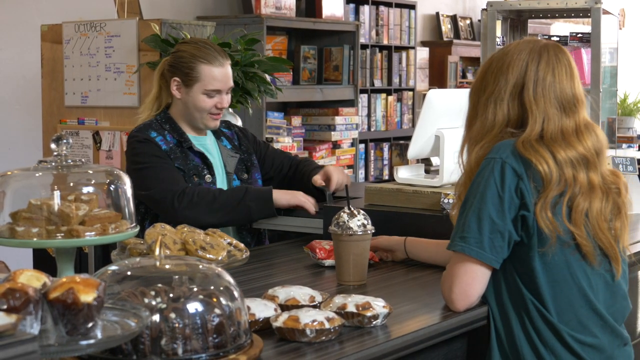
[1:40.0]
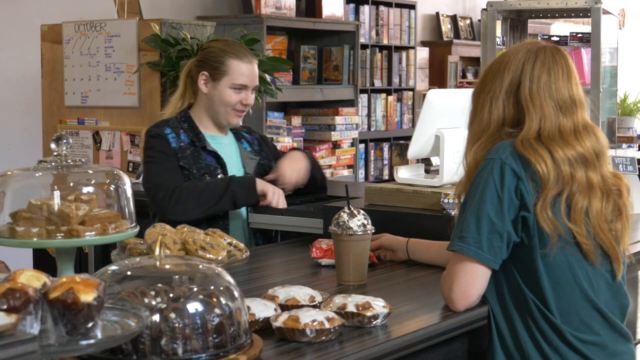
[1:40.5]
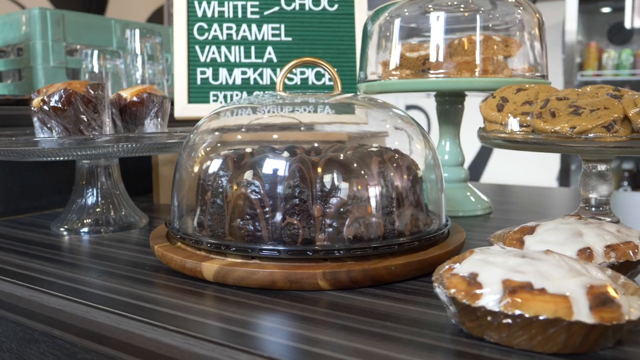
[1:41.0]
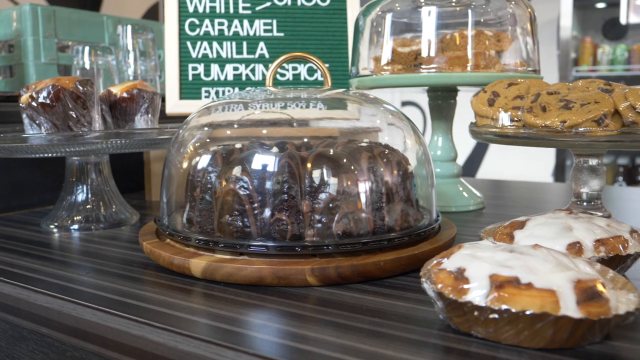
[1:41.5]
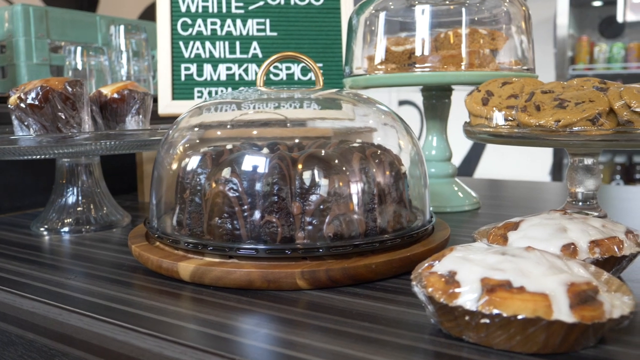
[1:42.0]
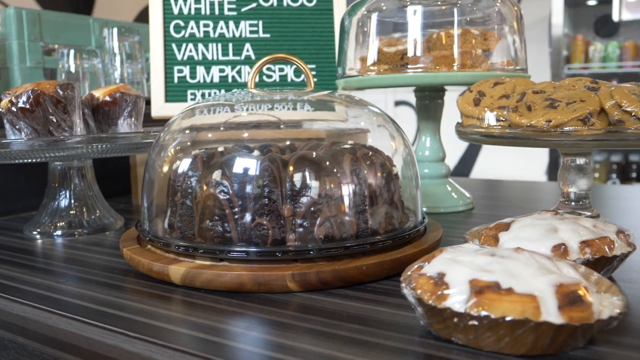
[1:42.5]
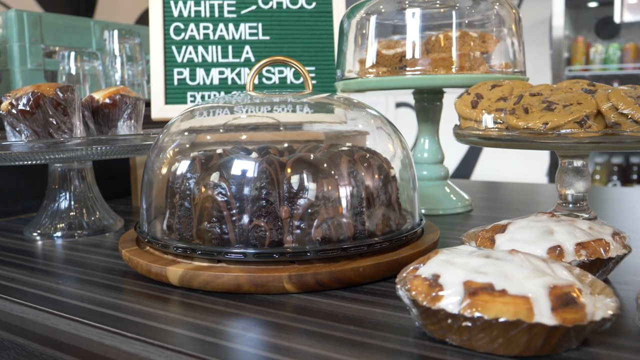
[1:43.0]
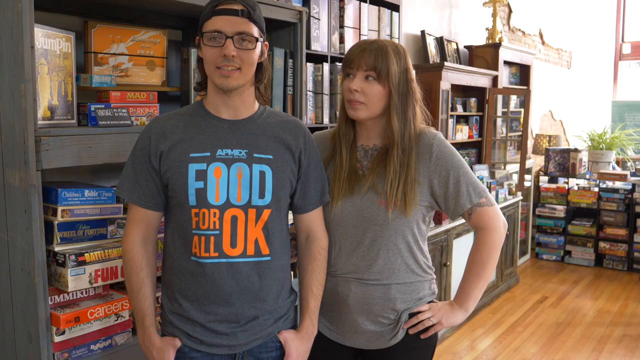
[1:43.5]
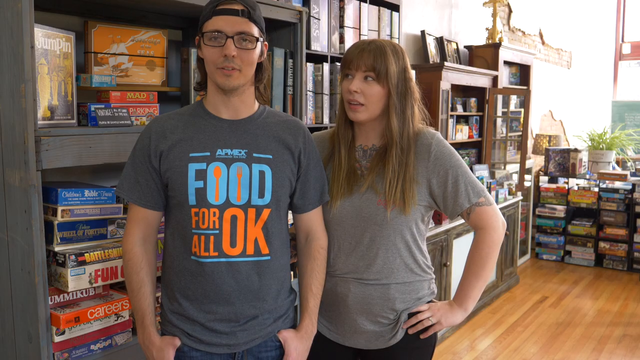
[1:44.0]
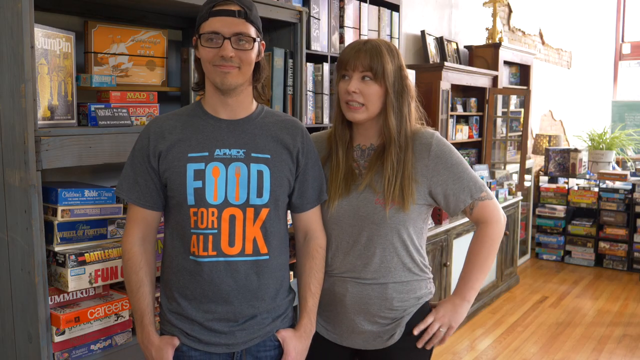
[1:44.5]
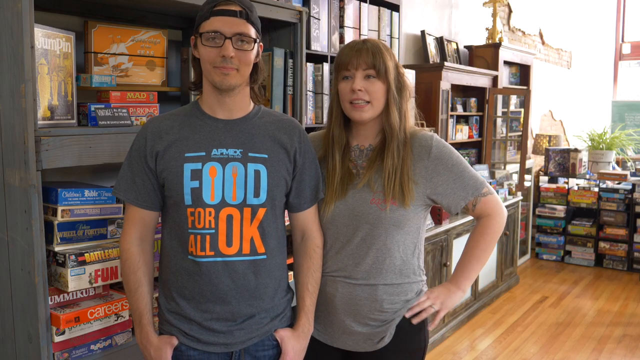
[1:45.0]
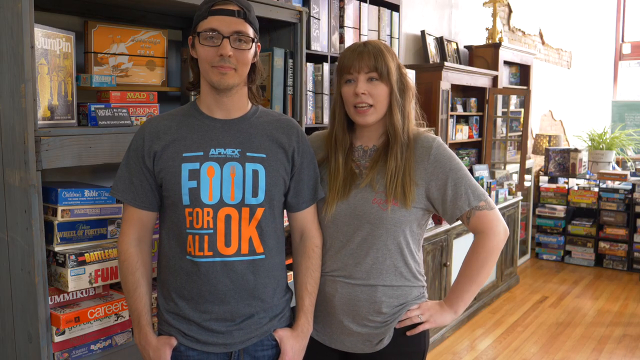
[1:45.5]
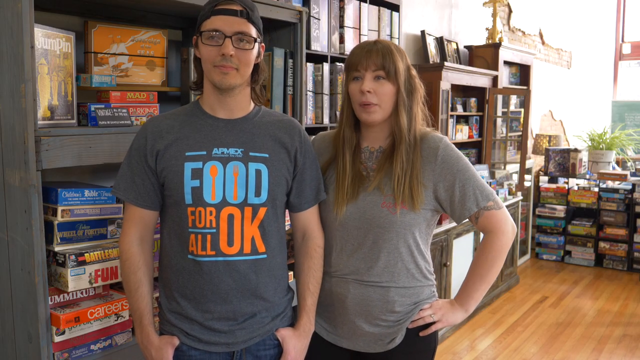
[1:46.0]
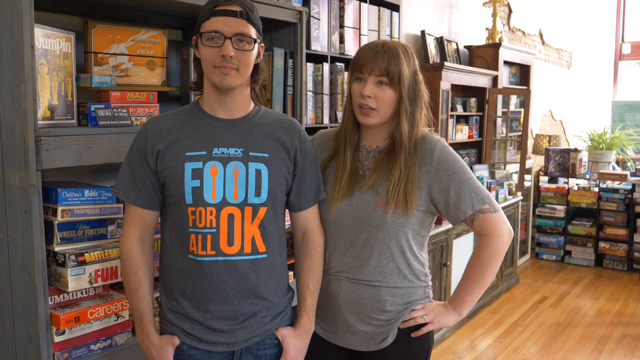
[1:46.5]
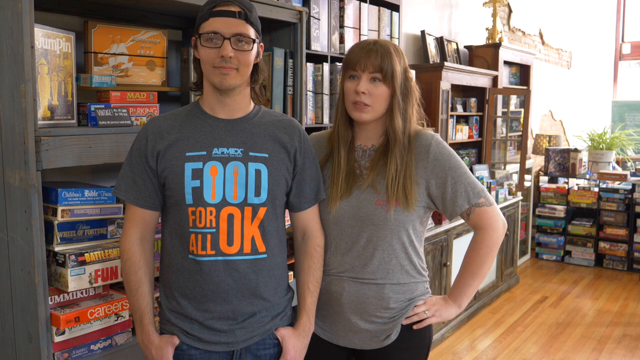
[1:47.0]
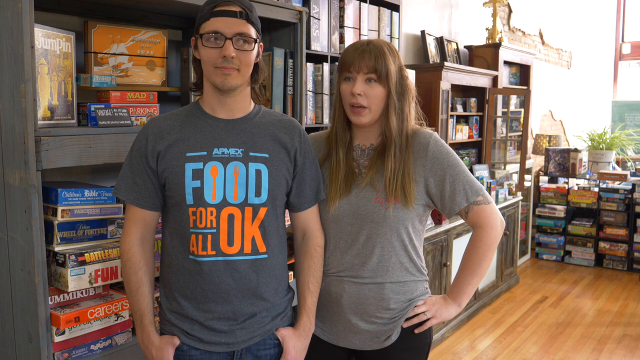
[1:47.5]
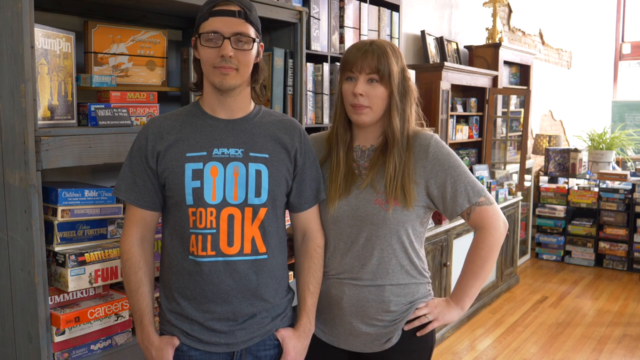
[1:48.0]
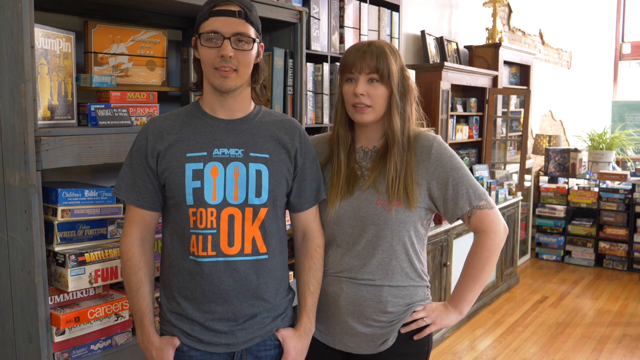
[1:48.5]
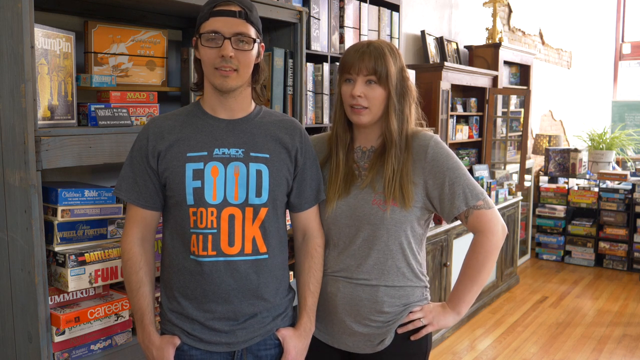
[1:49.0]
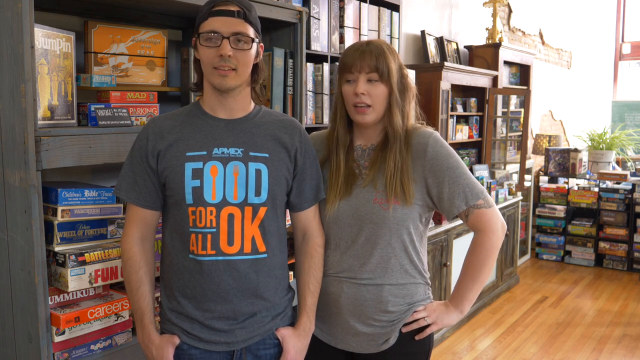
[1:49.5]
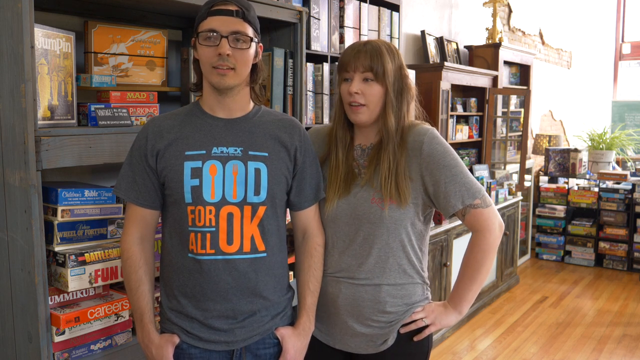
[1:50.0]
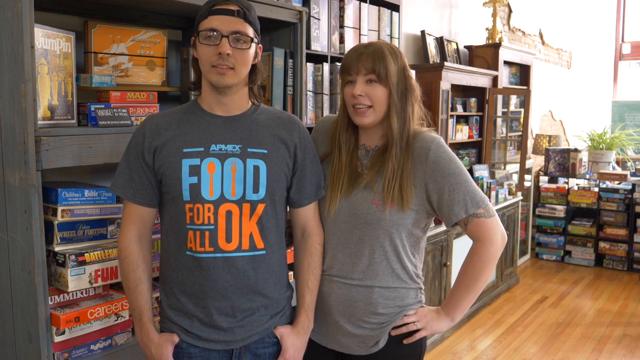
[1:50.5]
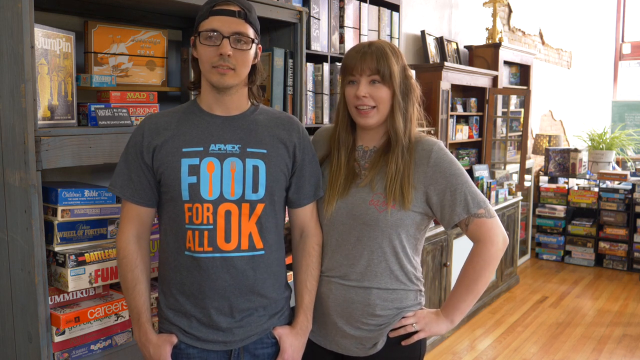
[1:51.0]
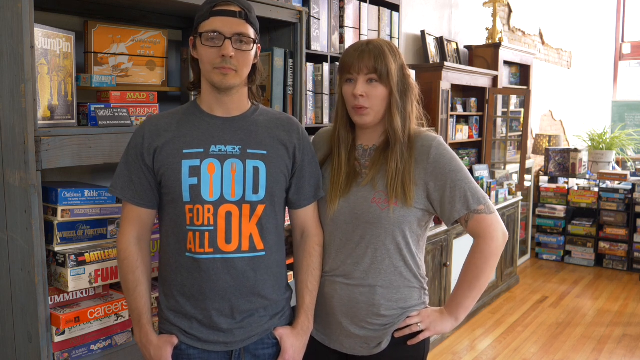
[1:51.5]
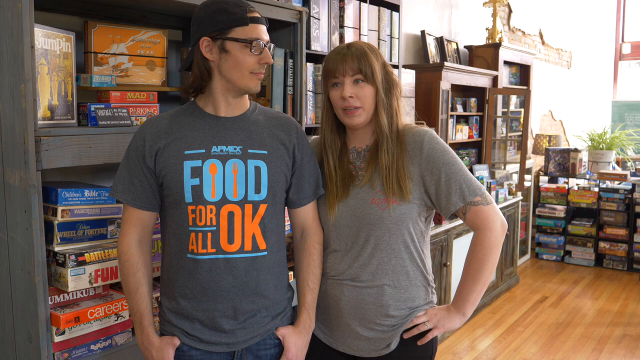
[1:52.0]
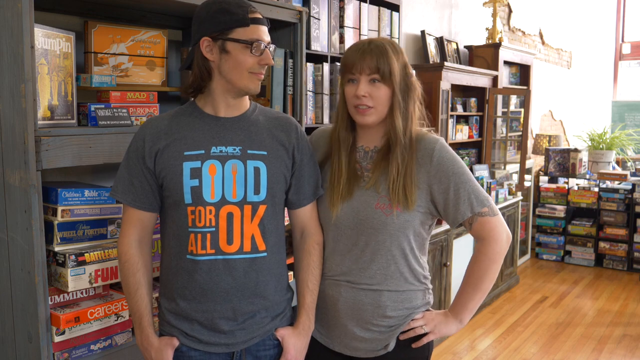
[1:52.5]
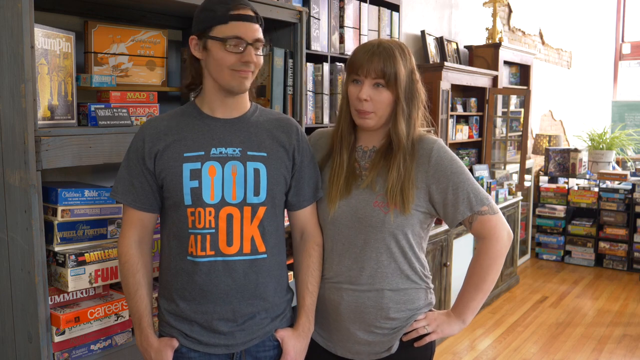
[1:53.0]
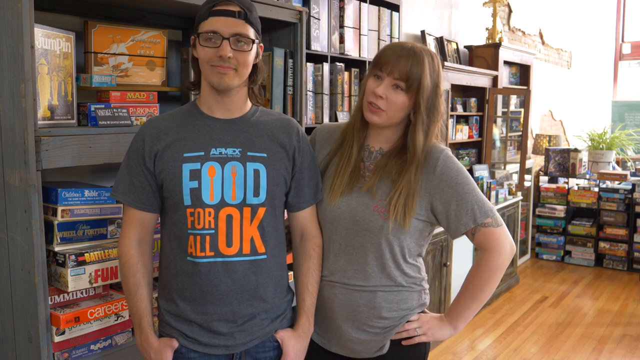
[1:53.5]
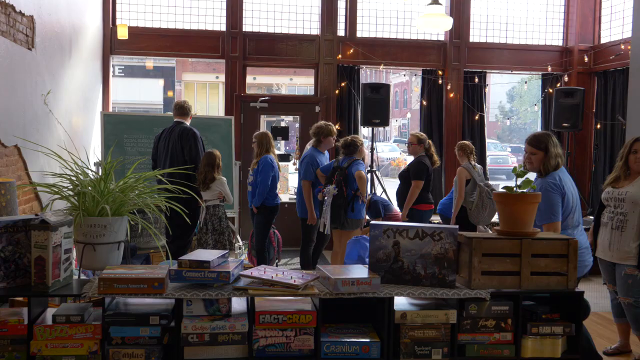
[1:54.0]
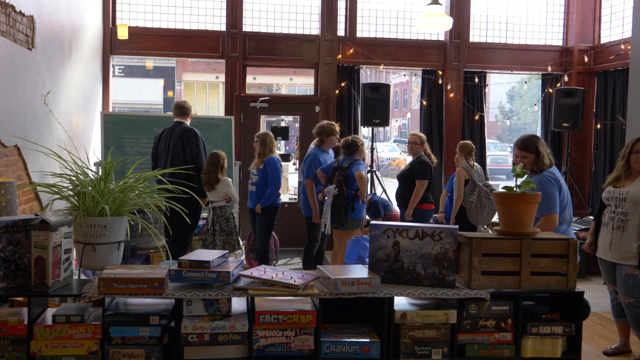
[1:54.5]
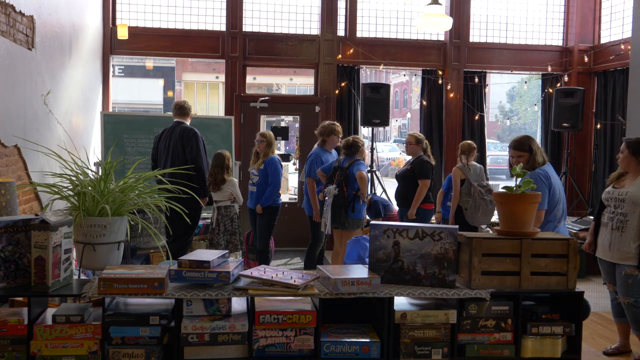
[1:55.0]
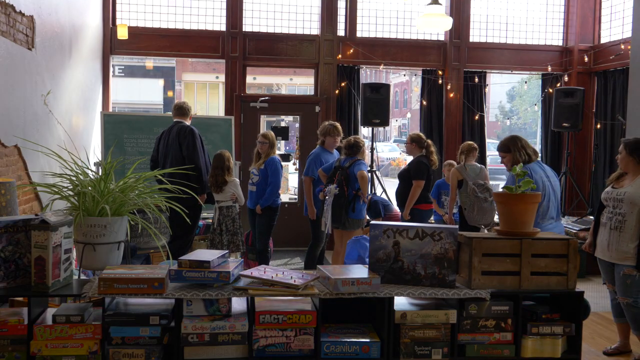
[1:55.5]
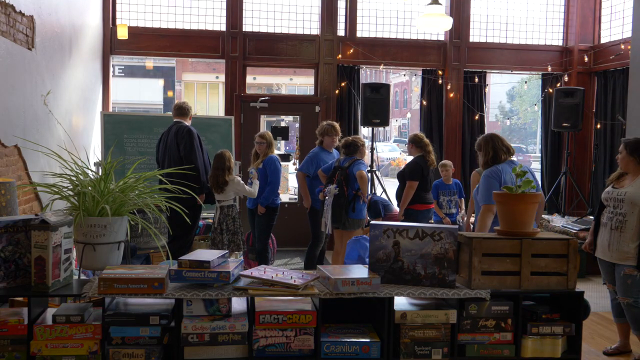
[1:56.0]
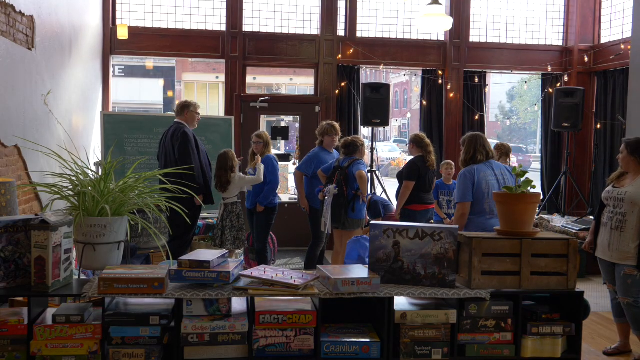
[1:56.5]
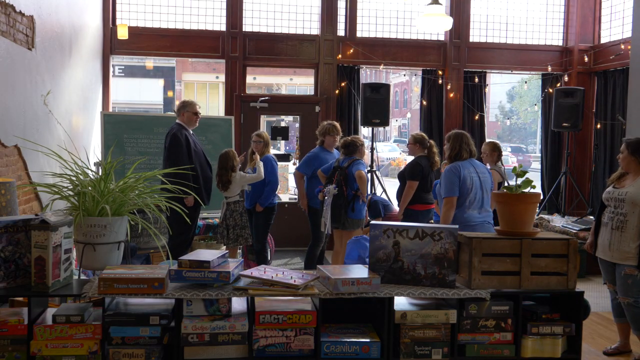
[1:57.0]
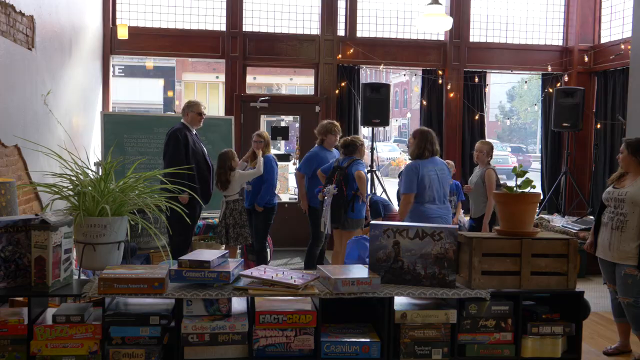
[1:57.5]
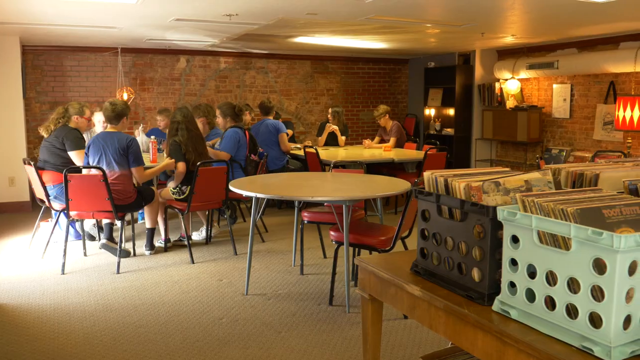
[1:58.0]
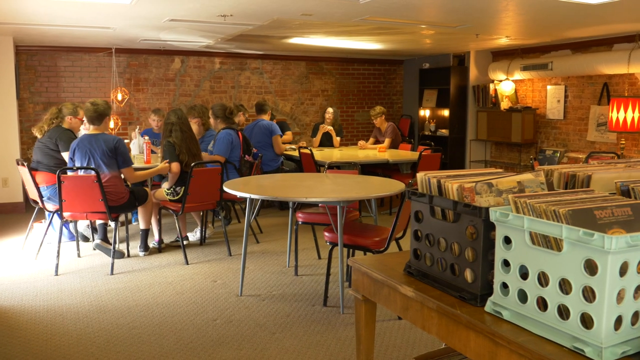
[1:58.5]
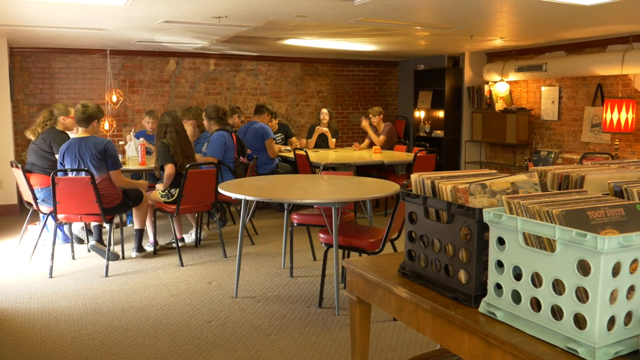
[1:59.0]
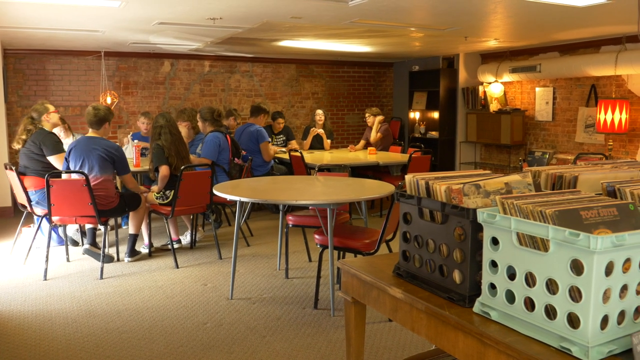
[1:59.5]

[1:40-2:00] The worker is behind the register. On the counter are several different cookies and pastries wrapped in plastic, some on display in cake display cases. A red-haired woman in a dark green shirt at the counter has a chocolate-flavored beverage. She leans against the counter with both arms on it, her left arm tucked into her upper chest area and her right arm extended across the counter to receive her change. The cashier, whose hair is in a ponytail, wears a black jacket with a light teal aqua shirt; she opens the change drawer fully and uses both hands to retrieve the change. The scene cuts to a close-up of cakes, pies and pastries: large chocolate chip cookies on the right, a cake cover with a chocolate cake underneath, and what appear to be two large cinnamon rolls in black trays in the bottom right corner.